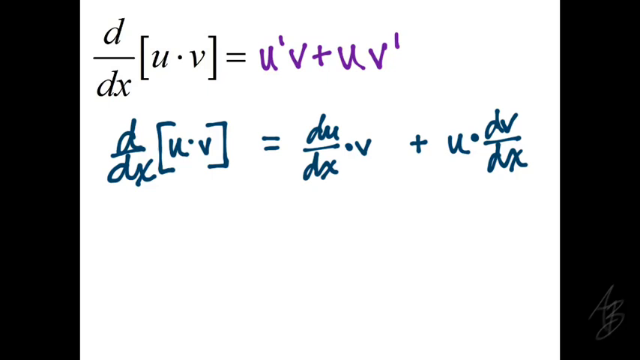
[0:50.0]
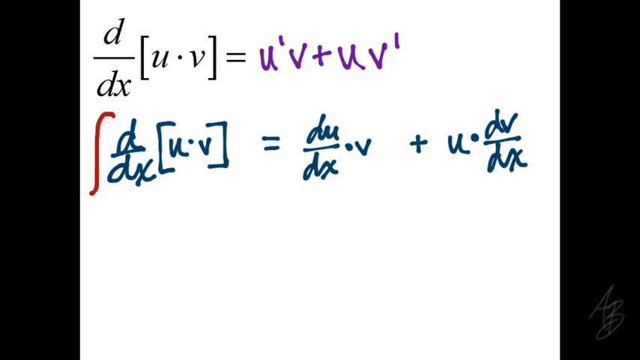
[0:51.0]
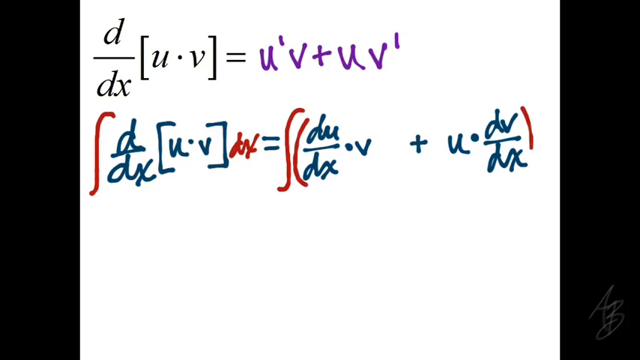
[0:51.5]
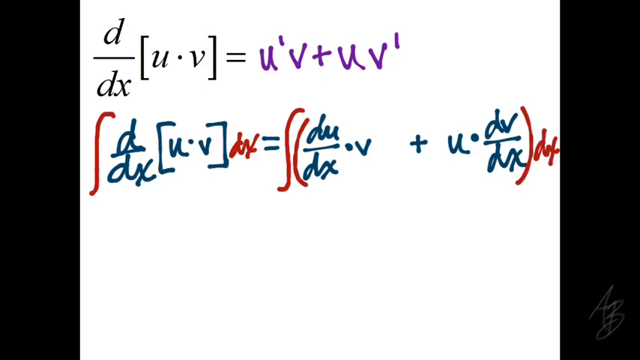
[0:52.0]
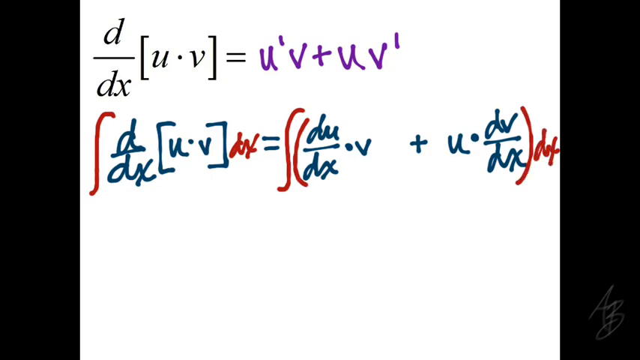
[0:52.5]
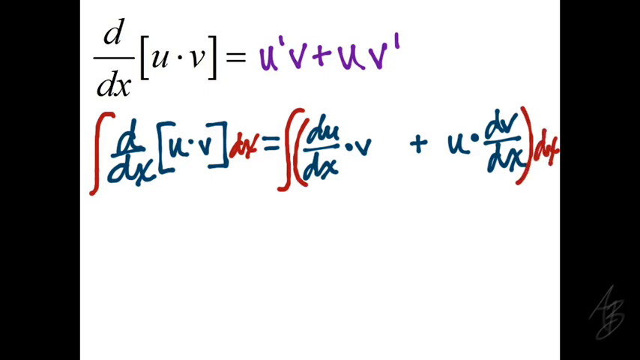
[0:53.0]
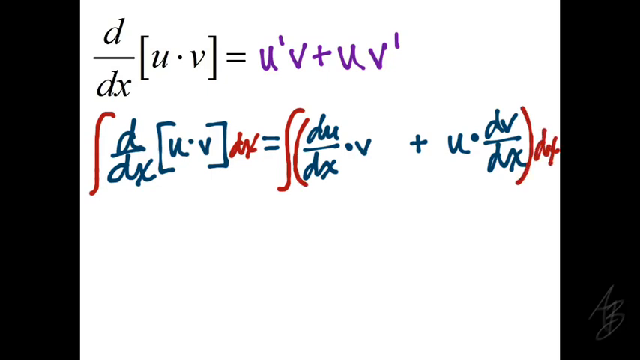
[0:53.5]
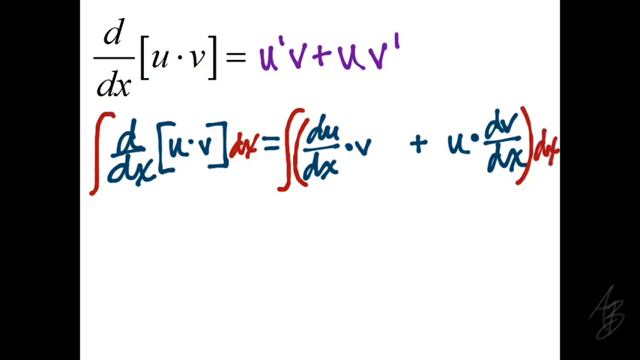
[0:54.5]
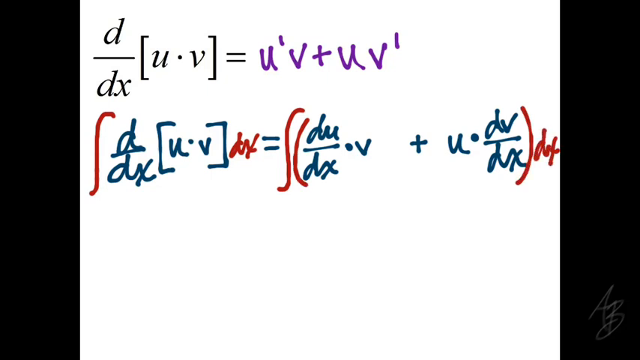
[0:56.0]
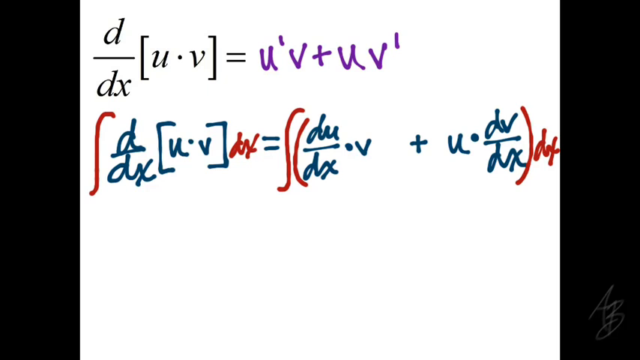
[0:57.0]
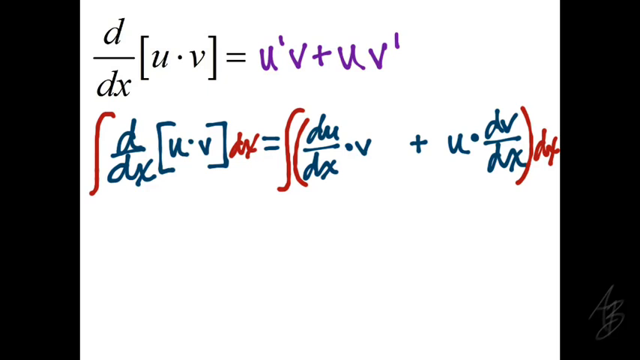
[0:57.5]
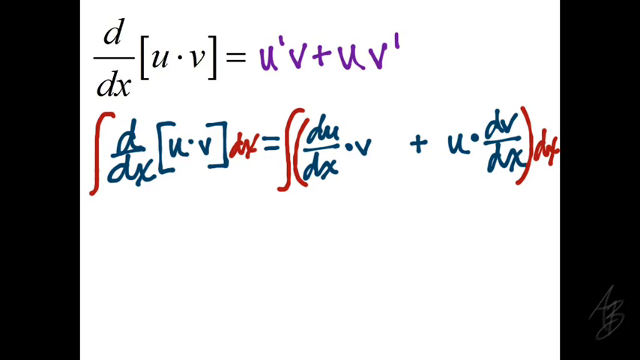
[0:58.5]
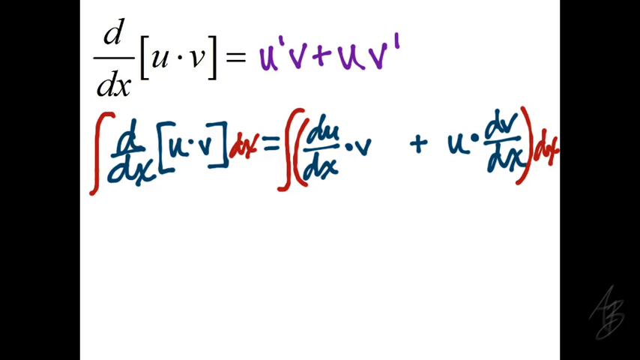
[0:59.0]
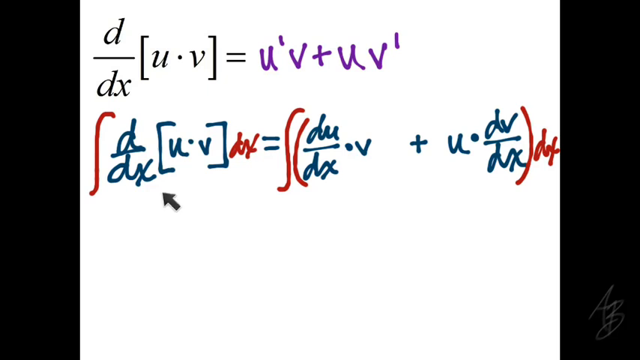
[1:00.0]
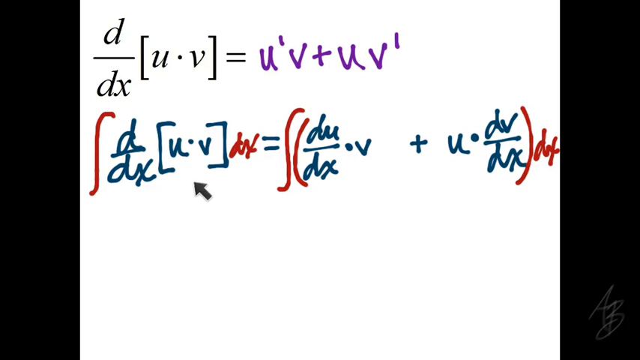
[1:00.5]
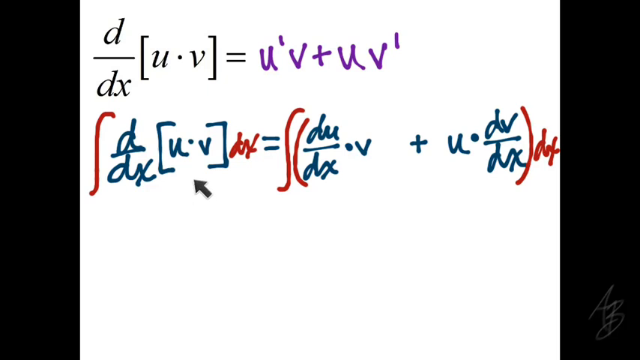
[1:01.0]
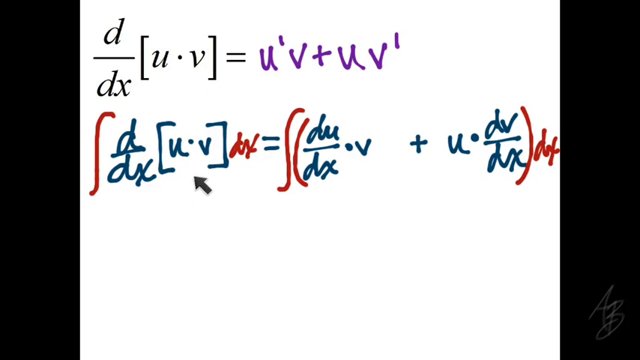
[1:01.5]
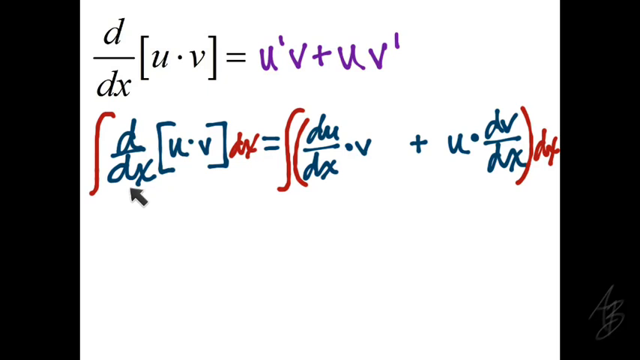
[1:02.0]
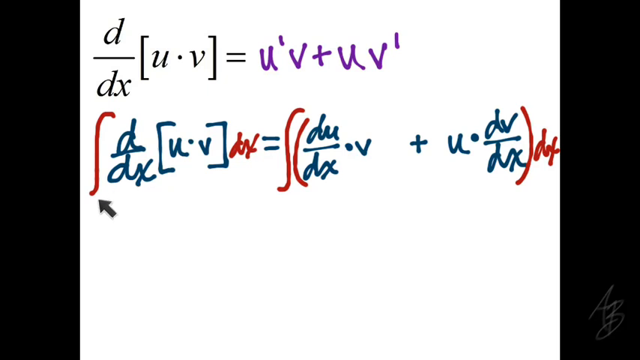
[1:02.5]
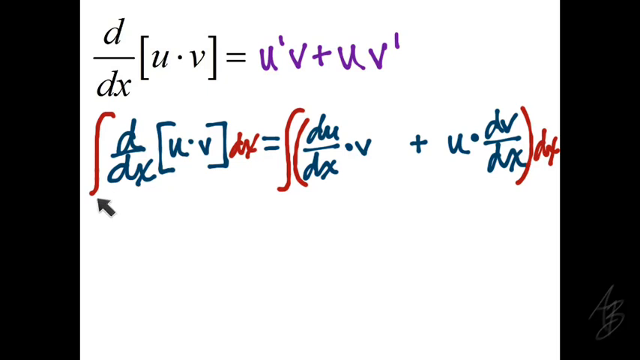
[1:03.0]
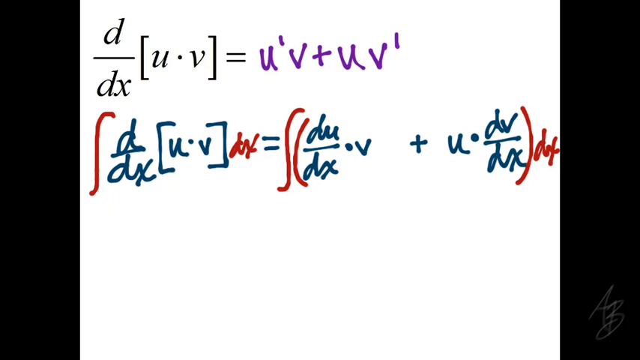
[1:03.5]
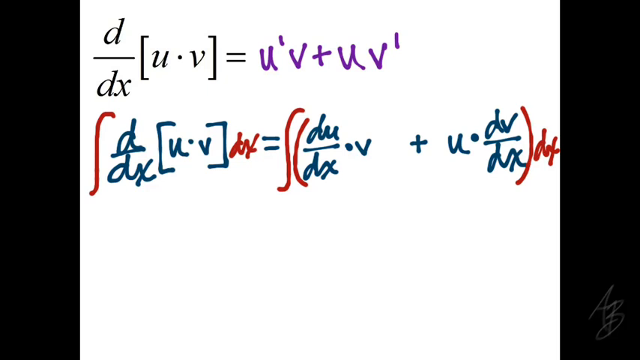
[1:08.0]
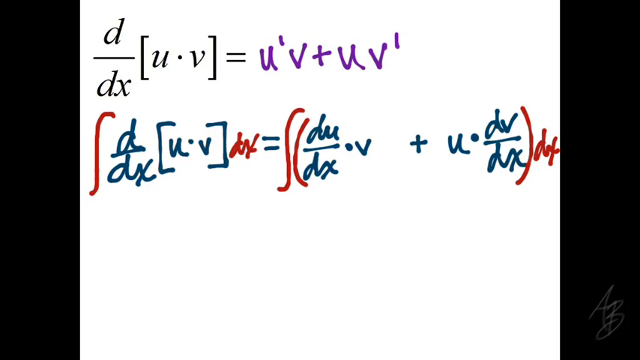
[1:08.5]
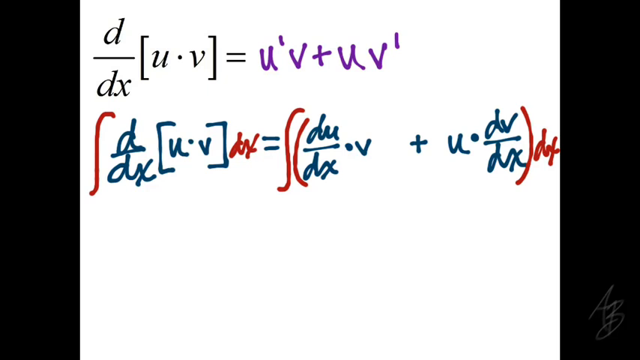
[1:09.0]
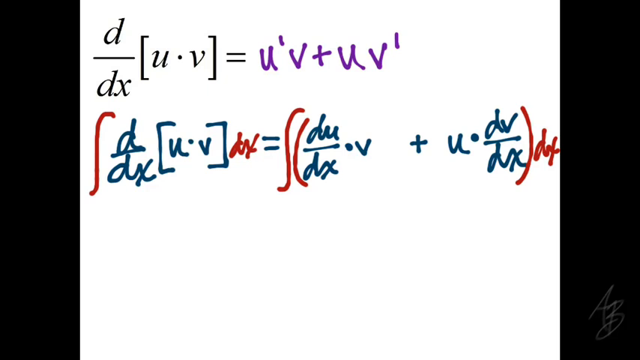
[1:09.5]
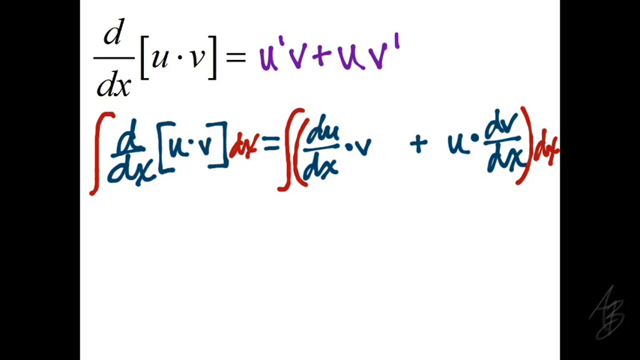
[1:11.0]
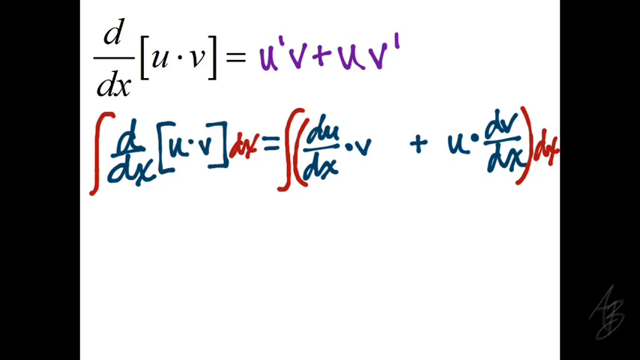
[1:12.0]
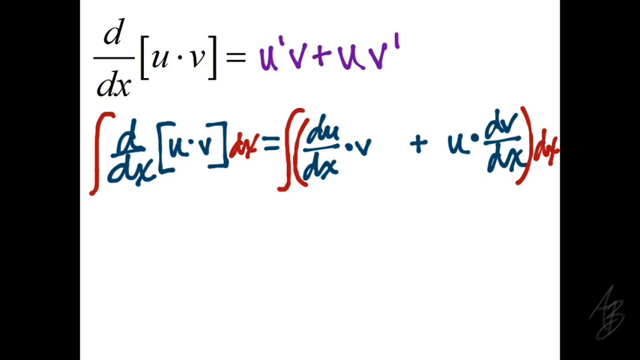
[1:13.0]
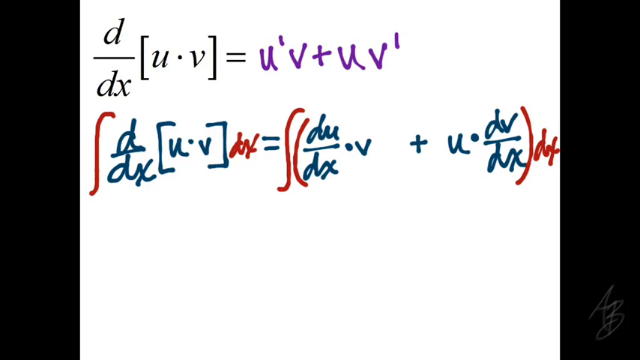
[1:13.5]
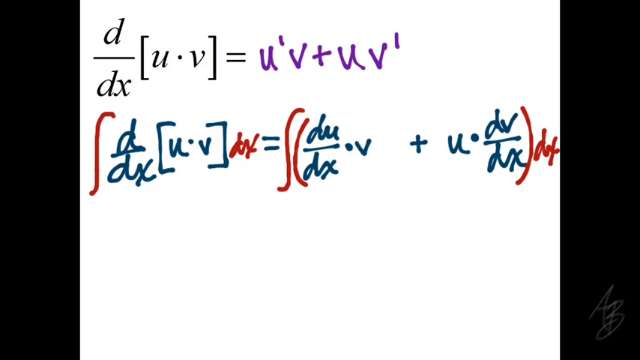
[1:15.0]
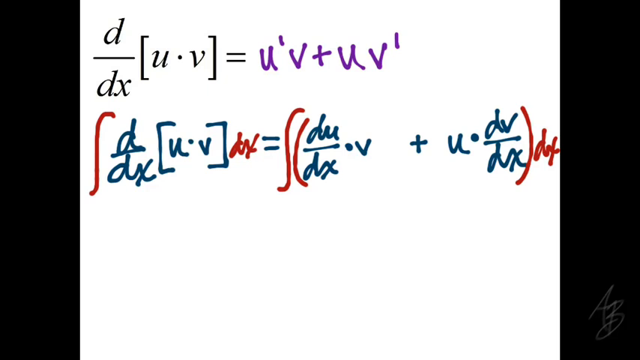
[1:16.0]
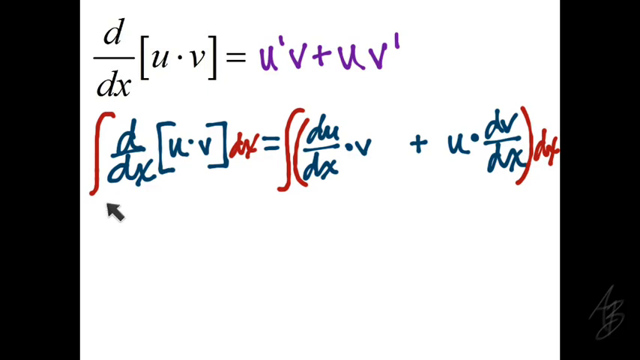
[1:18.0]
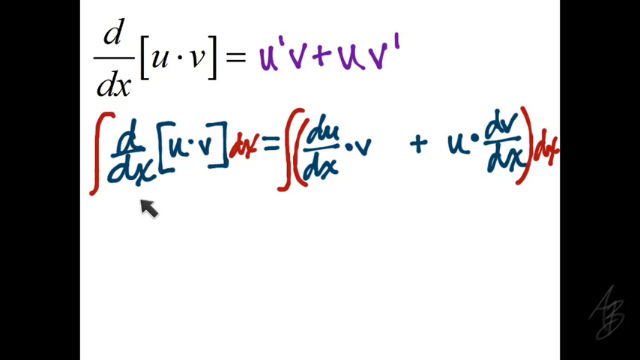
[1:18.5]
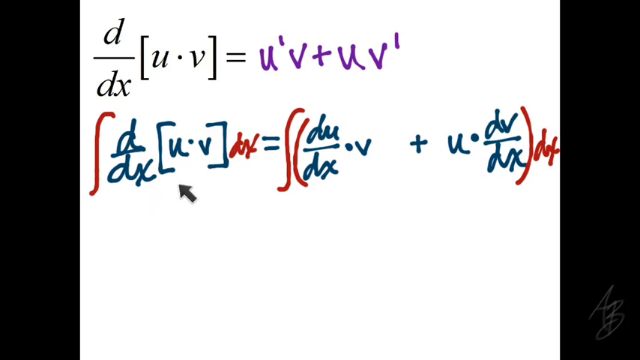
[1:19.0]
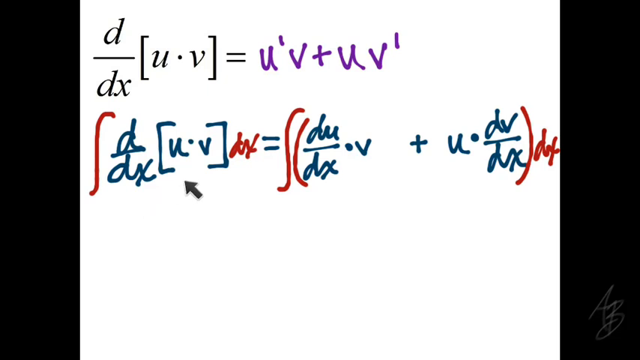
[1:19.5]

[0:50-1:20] On the second line, integral signs are added in red ink. On the left side of the equal sign, an integral sign is added at the beginning of the expression and a dx at the end, giving integral d over dx, open bracket, u times v, close bracket, times dx, with the integral sign and the last dx written in a red or maroon color. To the right of the equal sign is an integral, an open parenthesis, the existing du over dx times v plus u times dv over dx, and a close parenthesis in red, then times dx, also in red. The cursor turns into a pointer, which points to the u times v on the left side of the equation and to the integral sign.